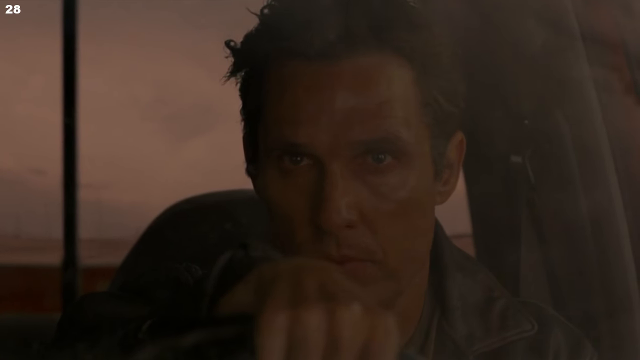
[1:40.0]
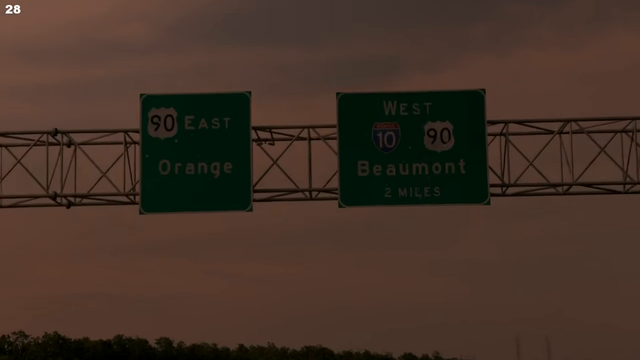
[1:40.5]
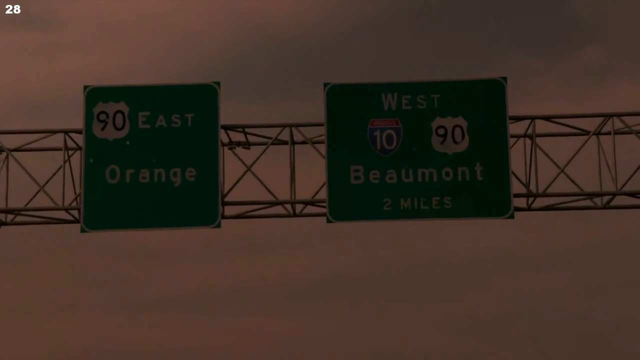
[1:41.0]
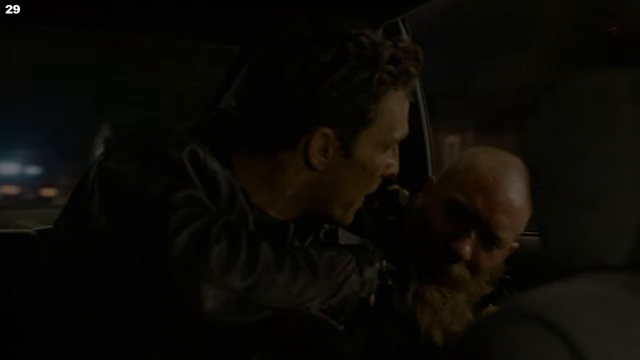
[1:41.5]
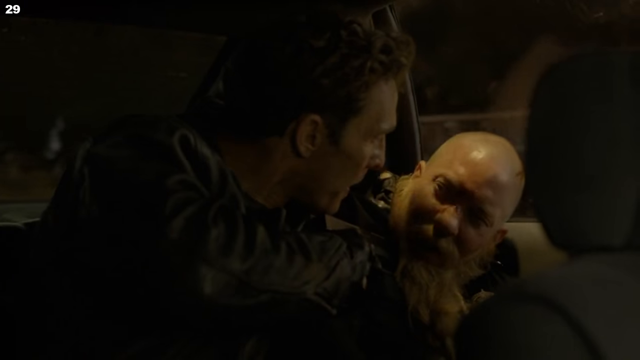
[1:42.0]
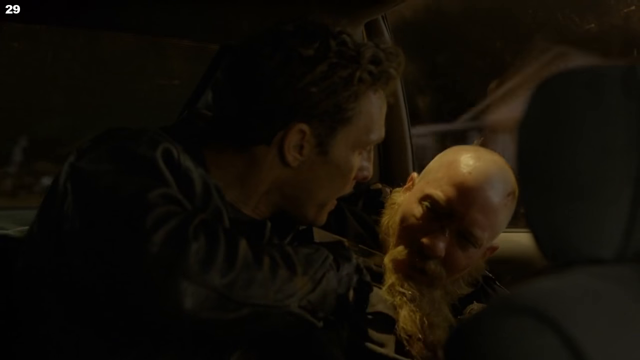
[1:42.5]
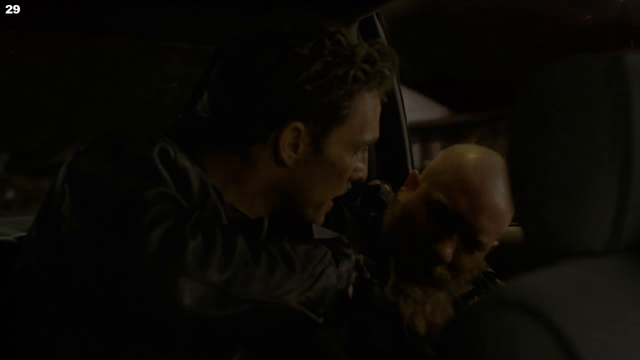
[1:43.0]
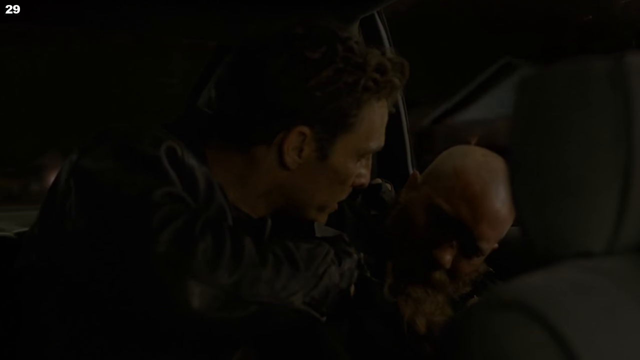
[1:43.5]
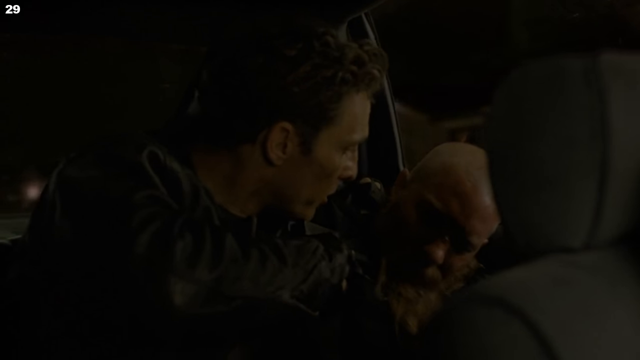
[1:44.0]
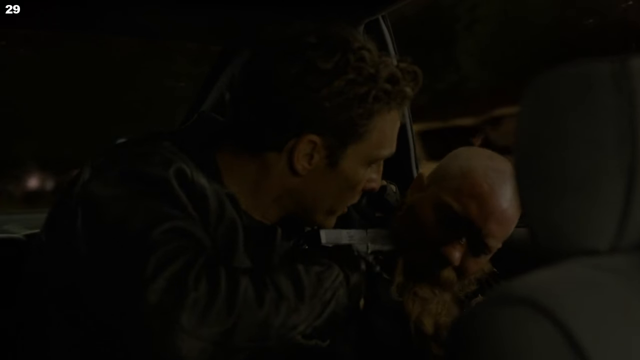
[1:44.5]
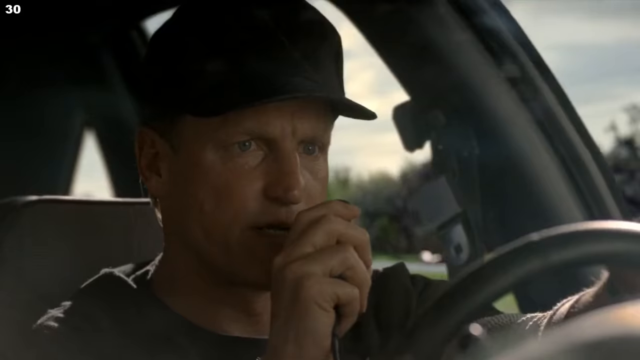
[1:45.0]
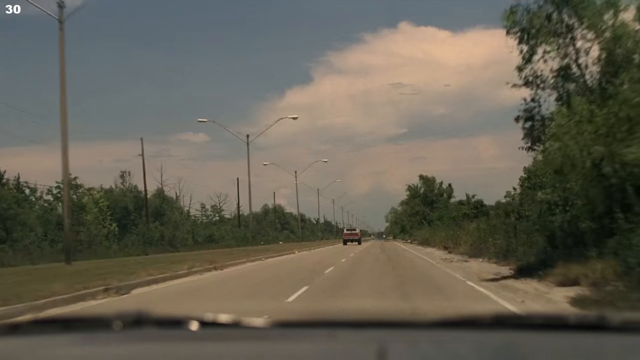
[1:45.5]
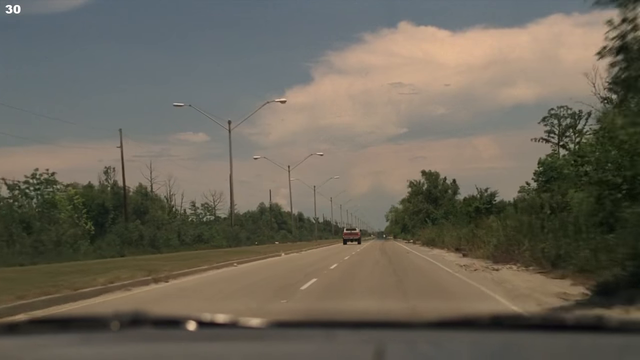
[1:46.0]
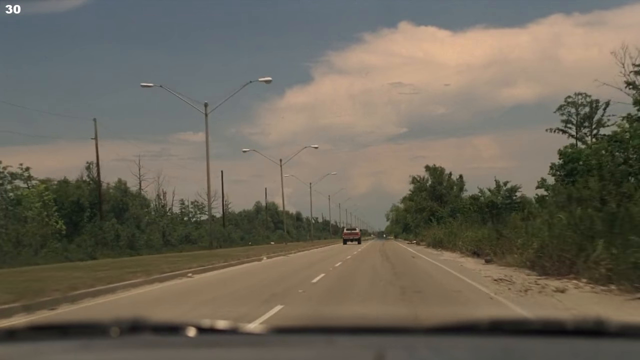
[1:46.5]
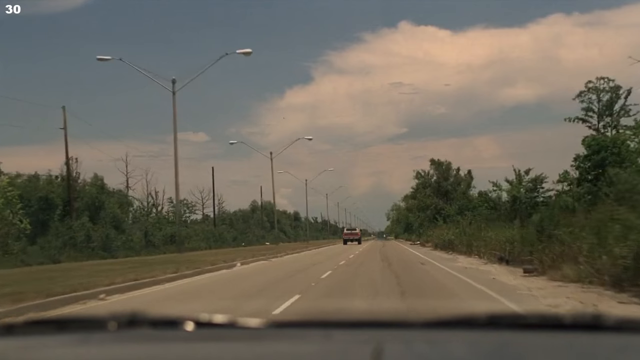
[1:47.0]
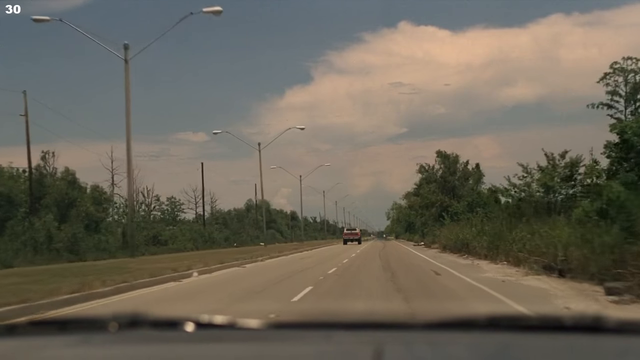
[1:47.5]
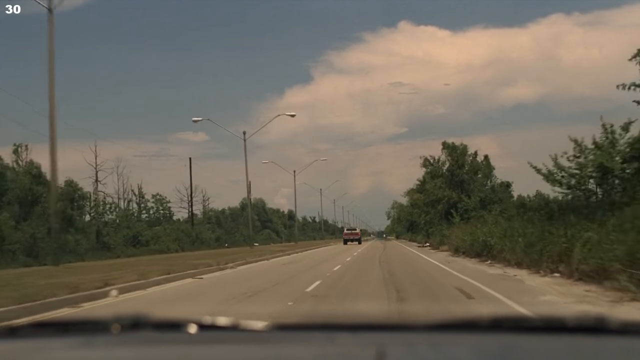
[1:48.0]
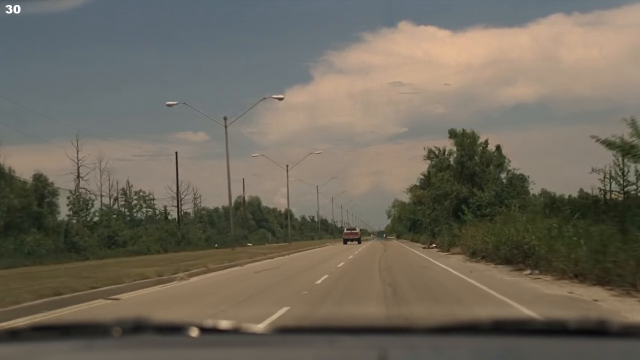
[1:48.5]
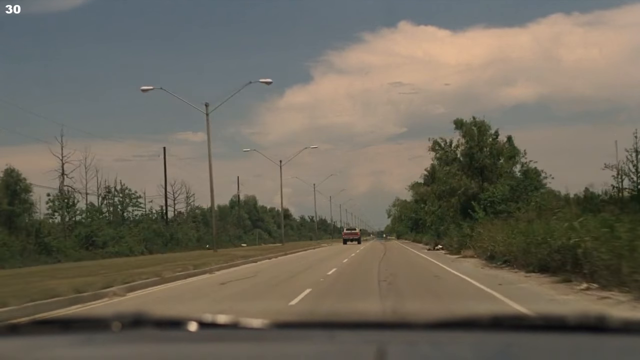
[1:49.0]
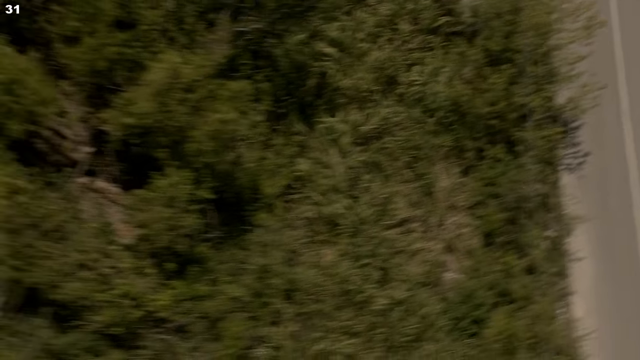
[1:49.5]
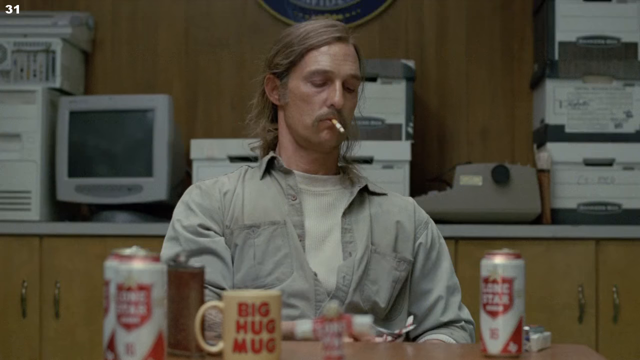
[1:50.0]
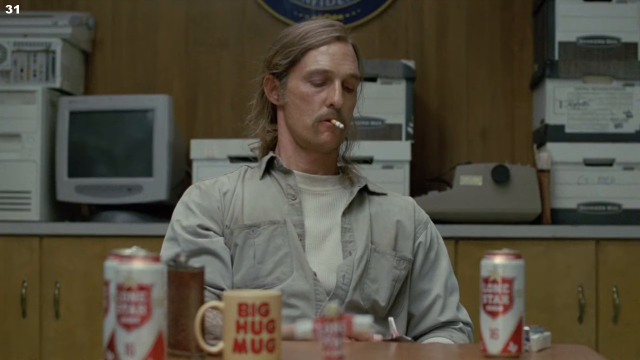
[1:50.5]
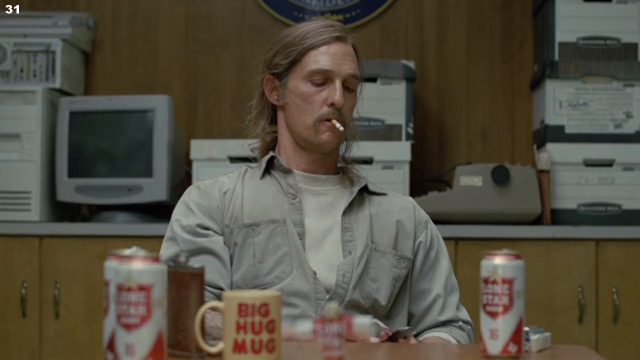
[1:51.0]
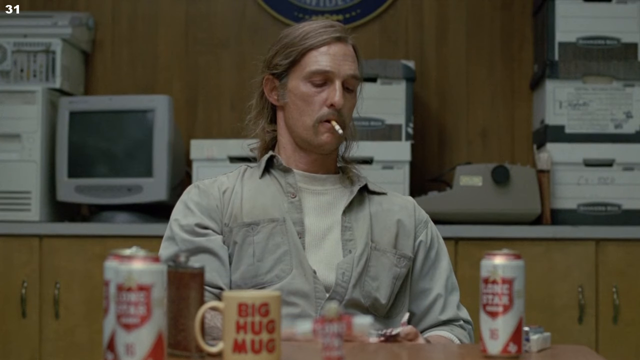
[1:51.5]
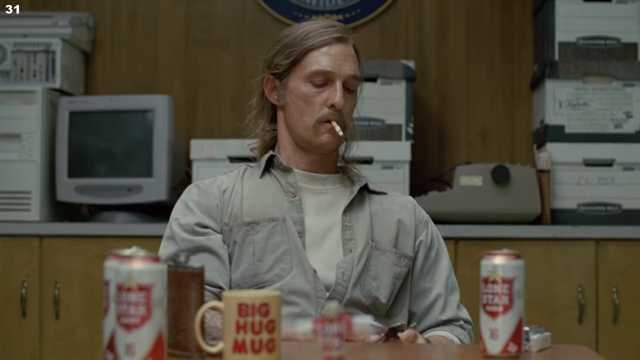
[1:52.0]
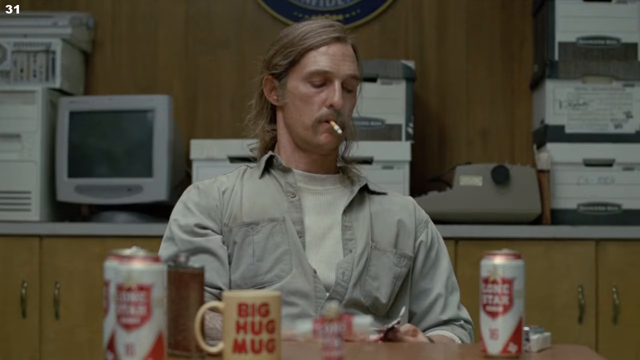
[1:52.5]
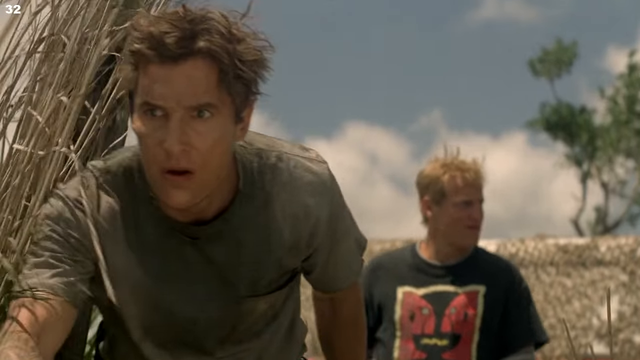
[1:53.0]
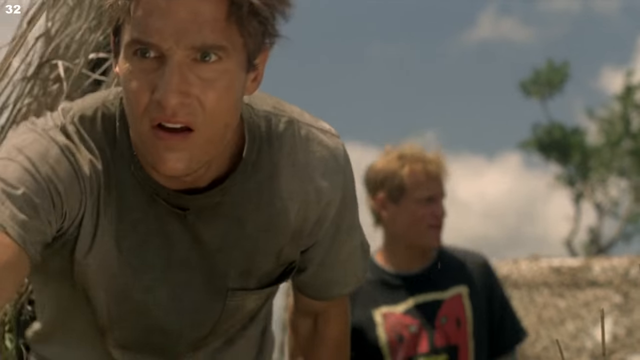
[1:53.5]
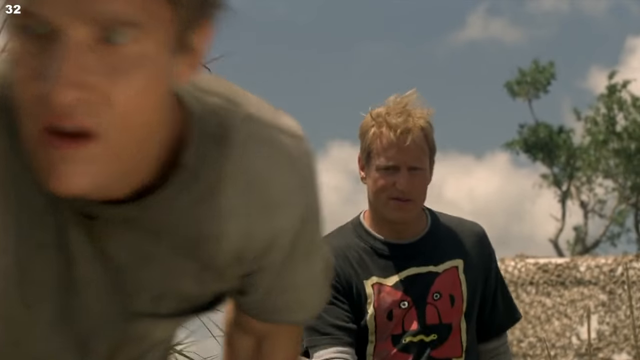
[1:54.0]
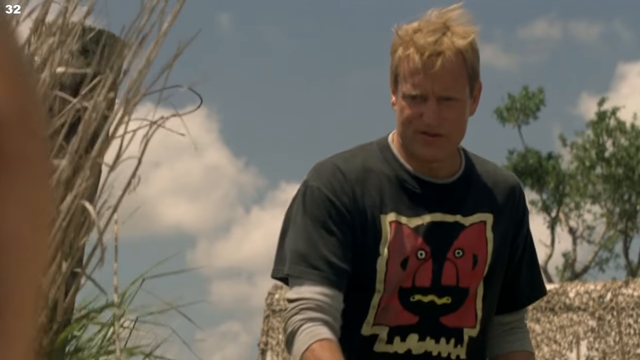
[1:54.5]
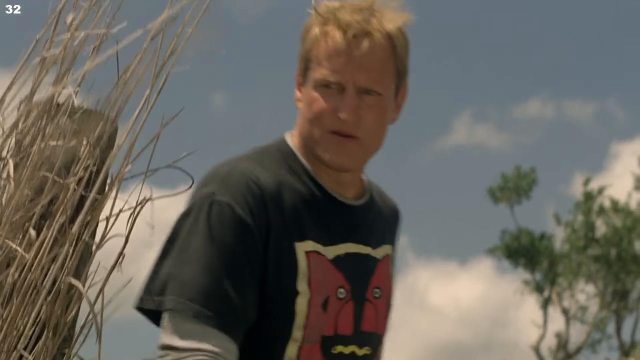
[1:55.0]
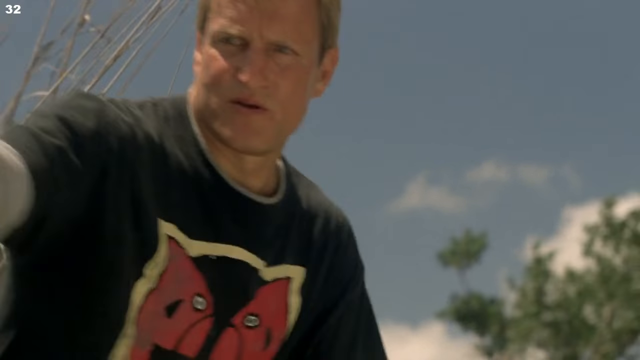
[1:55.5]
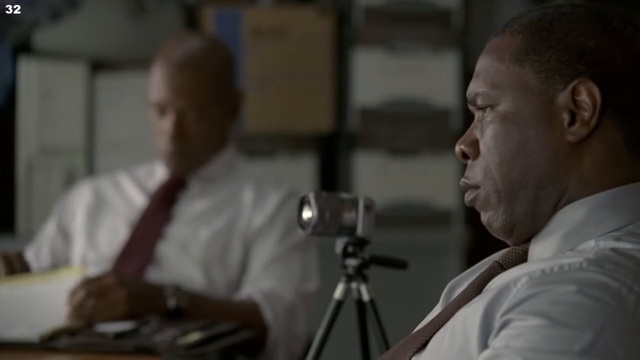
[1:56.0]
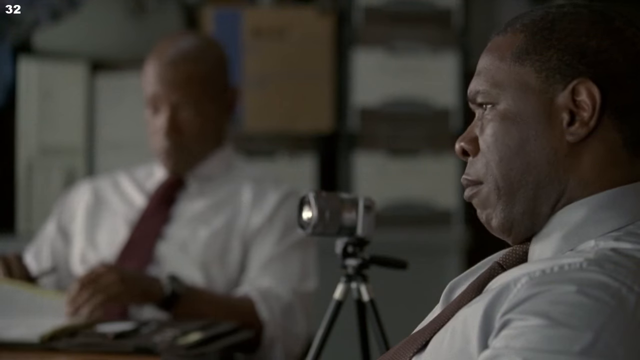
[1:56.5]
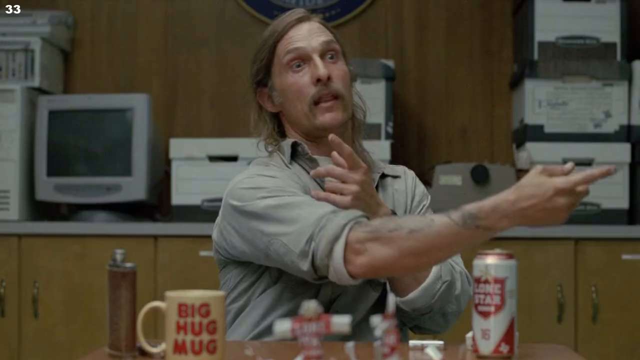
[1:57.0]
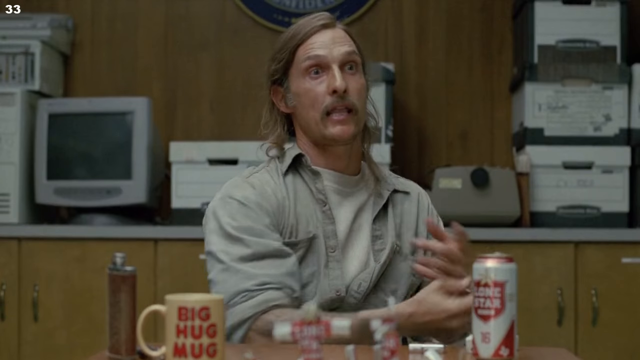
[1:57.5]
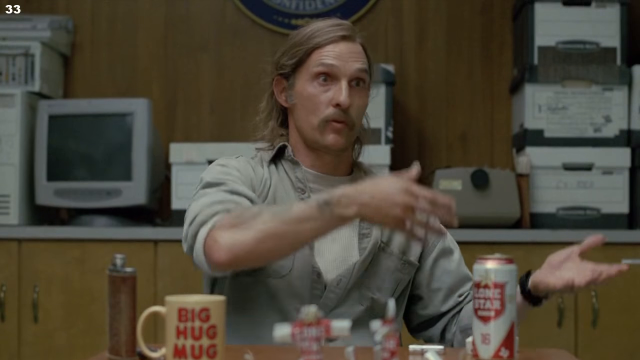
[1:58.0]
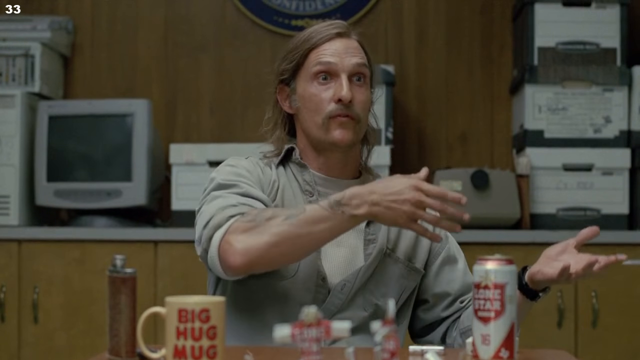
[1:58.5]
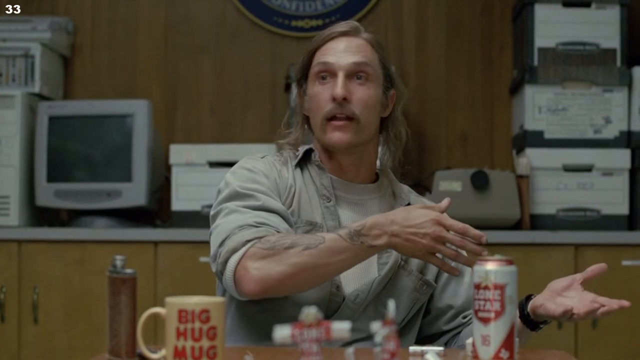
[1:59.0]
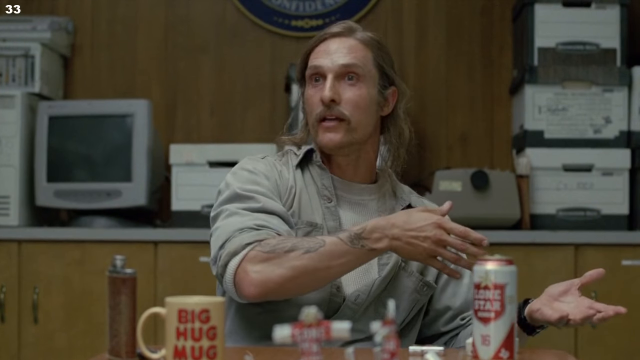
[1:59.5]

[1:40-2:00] There is a car, and a man points a gun at an old man. In daylight, a car passes trees and street lights, following another car. A man speaks on a phone, maybe angry or informing others. The man with the drugs is still sitting there, apparently thinking. Others pass in the middle of a field. Men hold a meeting, discussing something, apparently related to the man with golden hair who has alcohol and drugs on his table; maybe they are investigating him, or maybe he is the leader. They appear to be corrupt police officers.